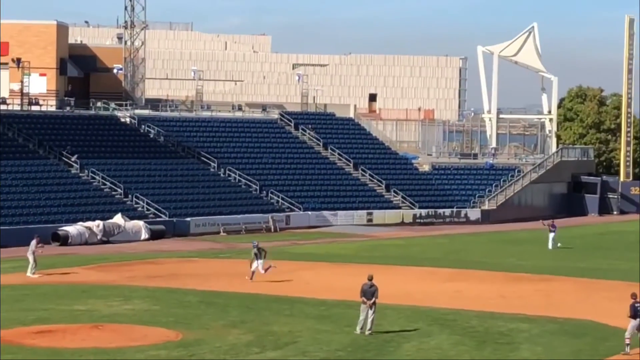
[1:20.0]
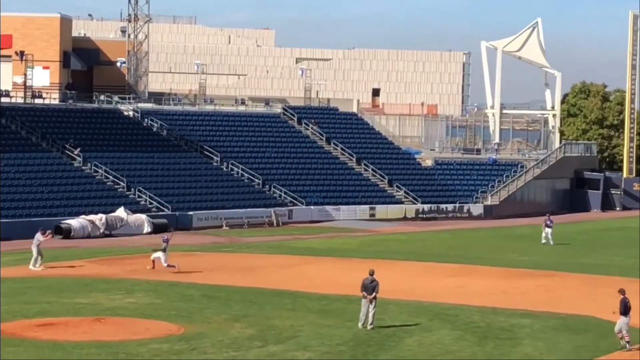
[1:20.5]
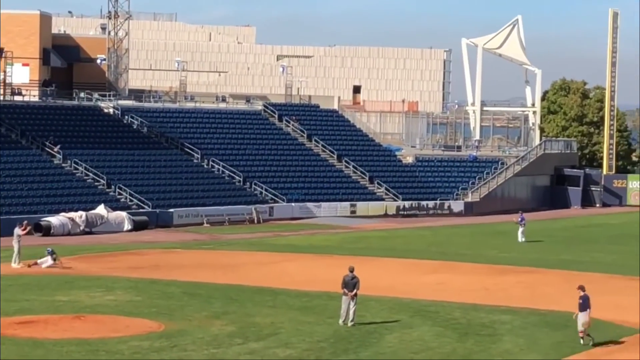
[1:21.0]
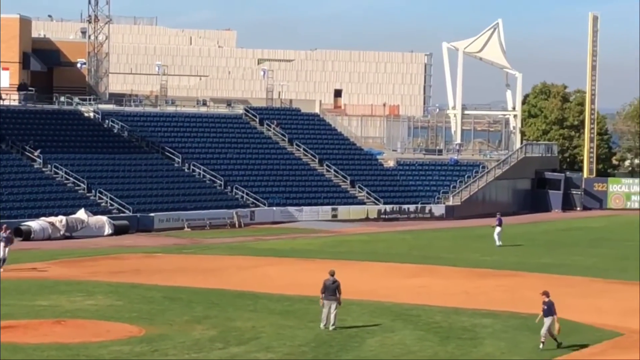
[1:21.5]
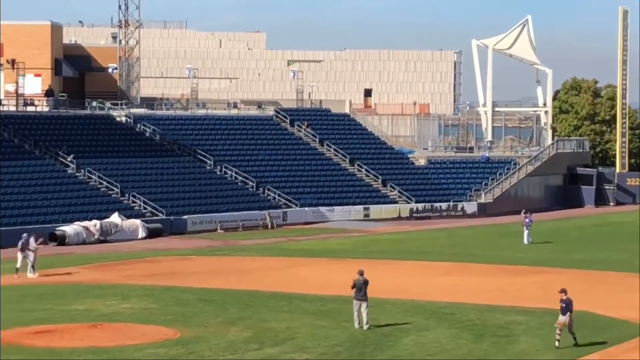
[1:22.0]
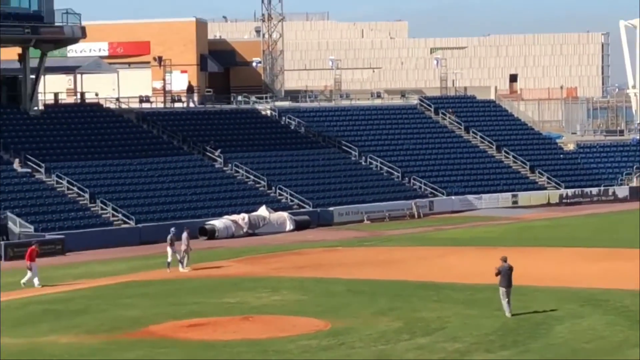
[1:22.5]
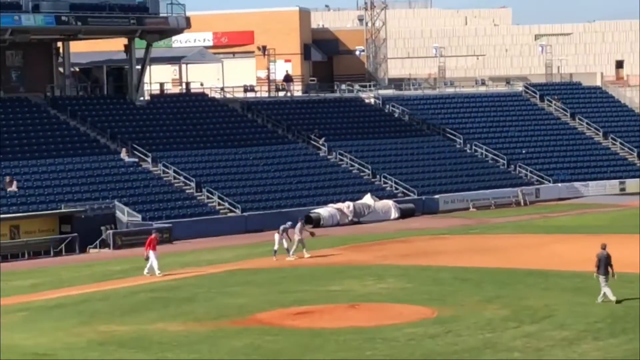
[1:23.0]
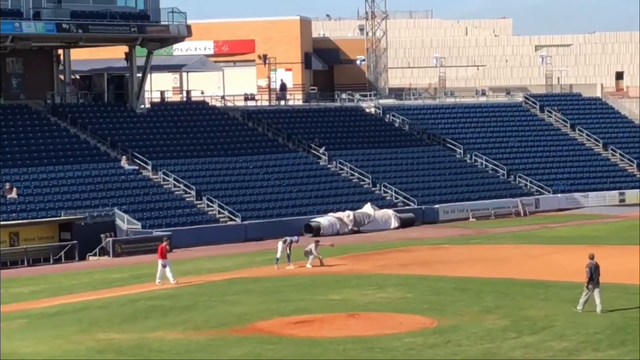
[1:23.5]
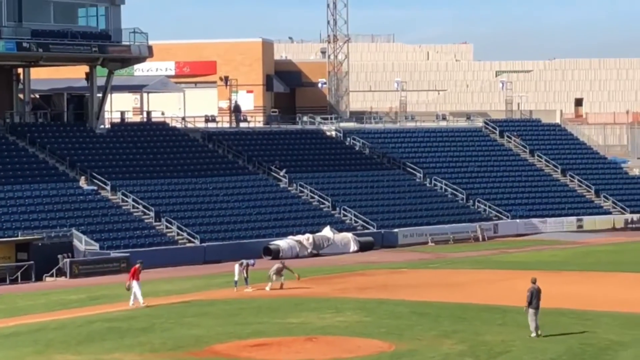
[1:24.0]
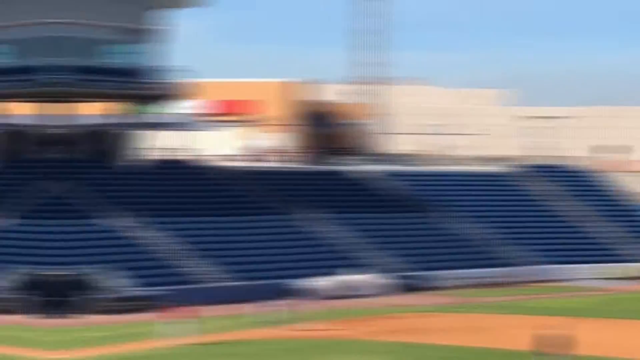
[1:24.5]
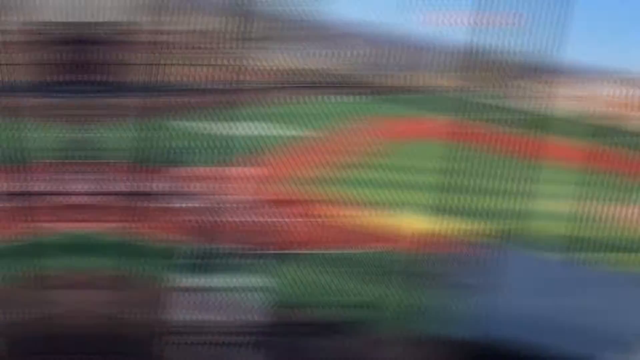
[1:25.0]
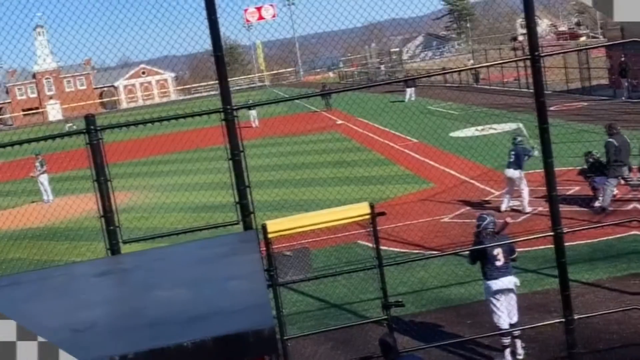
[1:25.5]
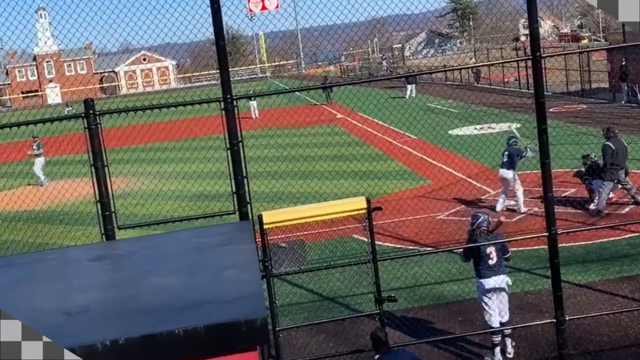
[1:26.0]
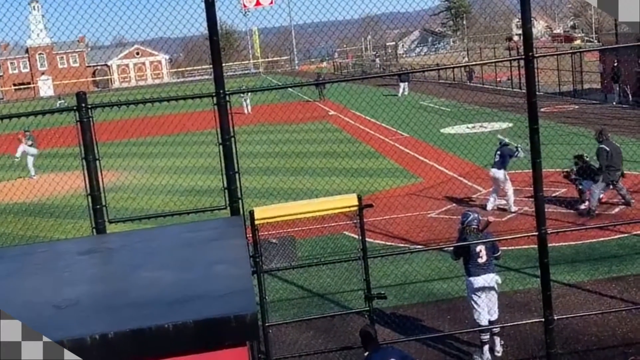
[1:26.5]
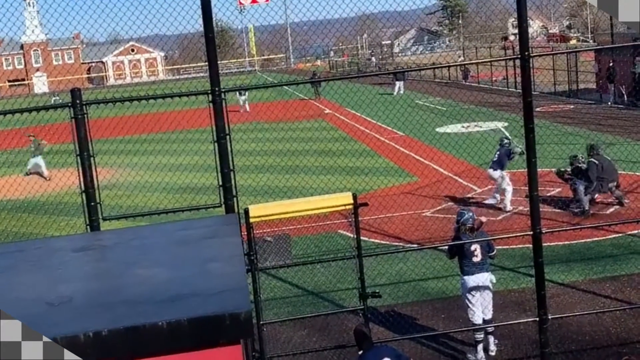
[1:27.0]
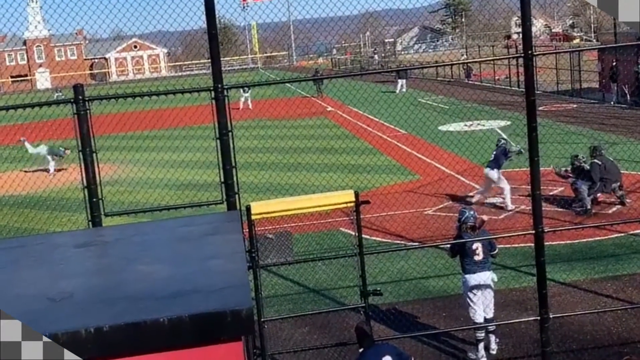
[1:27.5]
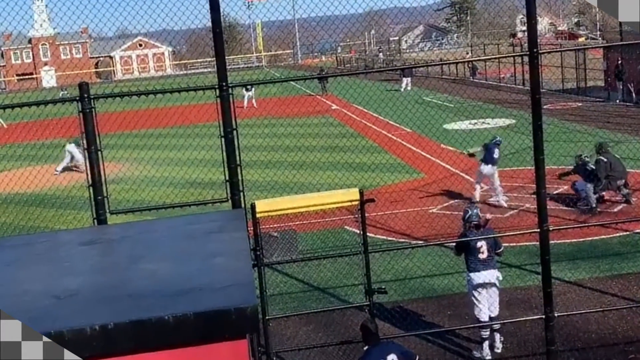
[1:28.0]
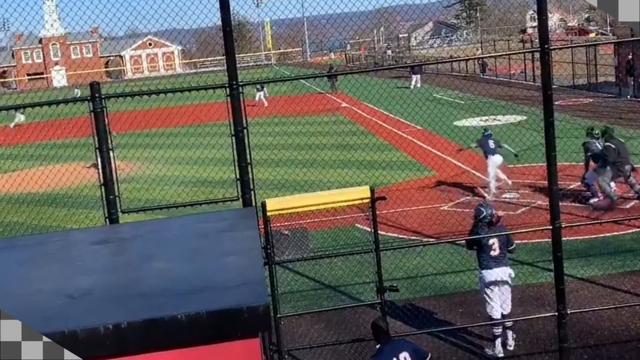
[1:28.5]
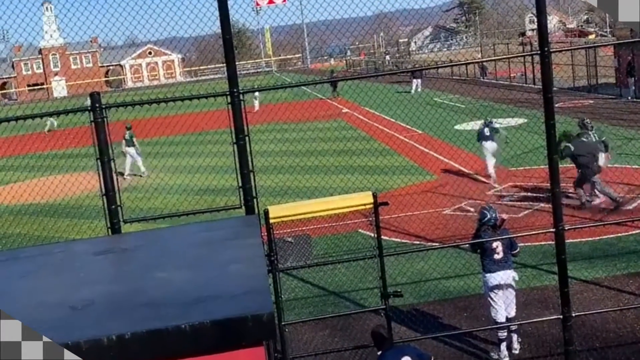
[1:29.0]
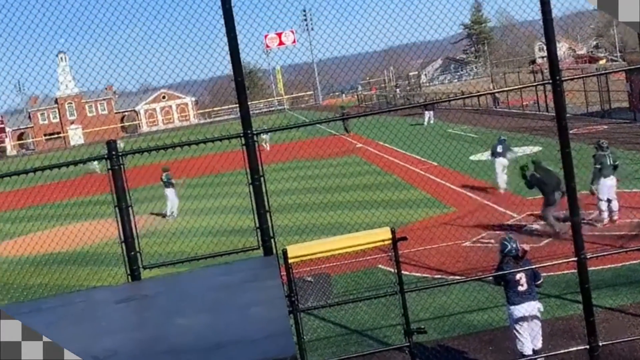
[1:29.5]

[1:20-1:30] A baseball game is going on outside, possibly a practice, since there are not many people in the stands. The sky is blue with not too many clouds. Plenty of black fencing goes around the field. Only a couple of people, perhaps owners, sit in the stands watching, and there is also an umpire.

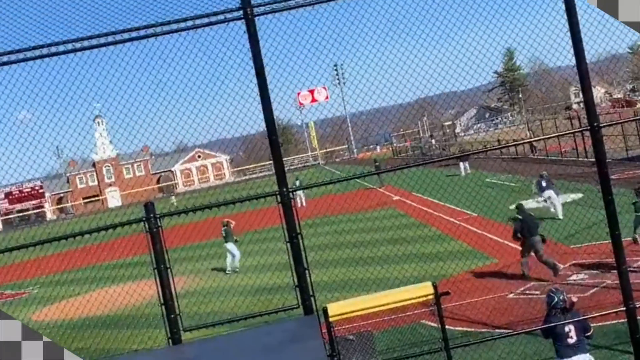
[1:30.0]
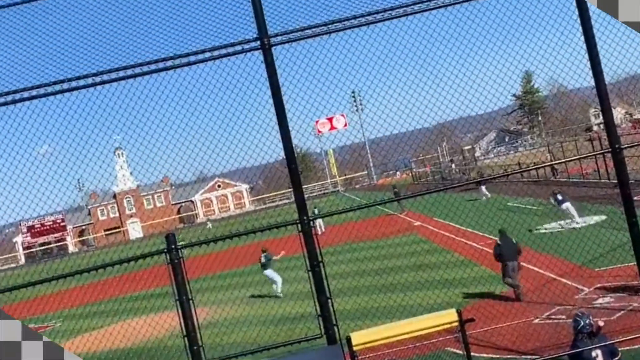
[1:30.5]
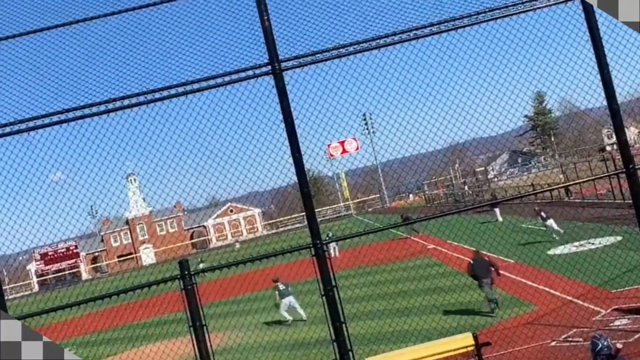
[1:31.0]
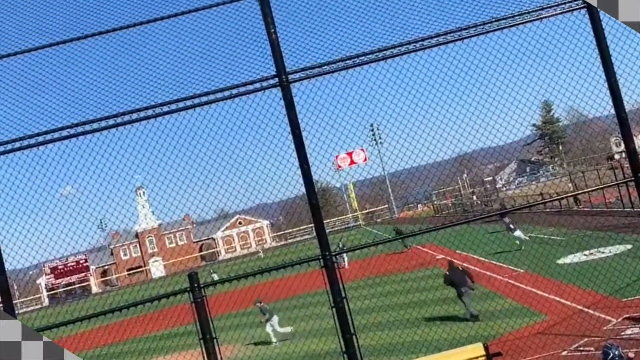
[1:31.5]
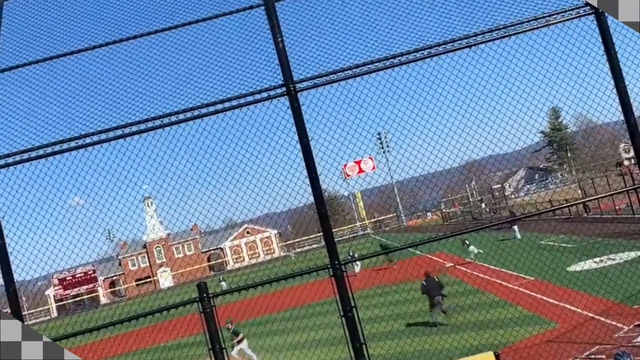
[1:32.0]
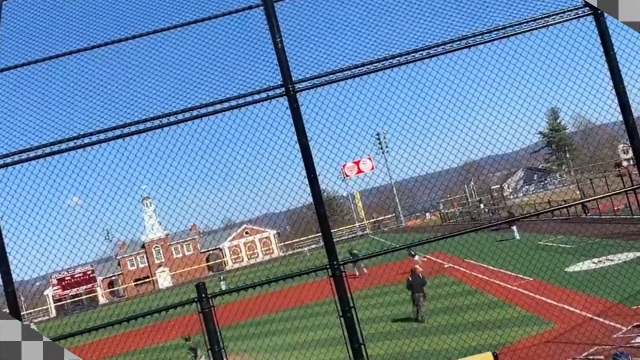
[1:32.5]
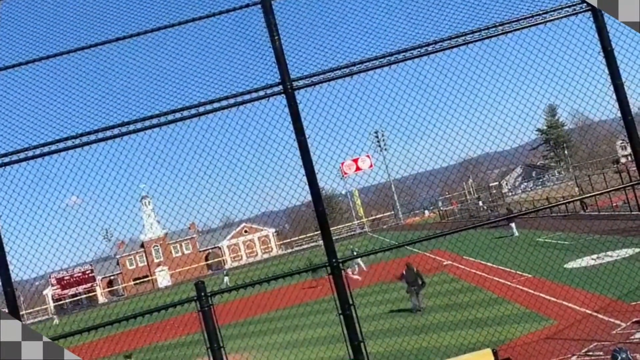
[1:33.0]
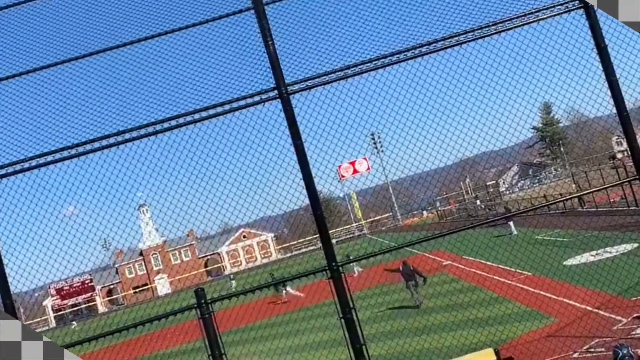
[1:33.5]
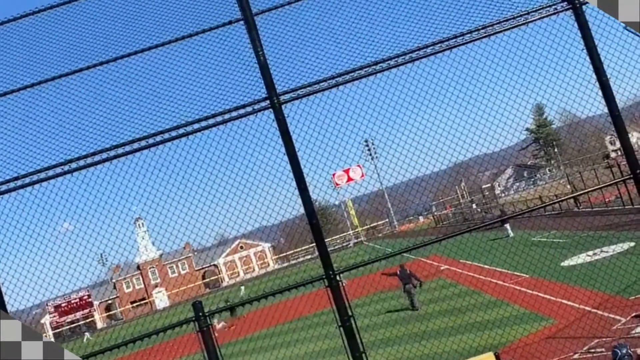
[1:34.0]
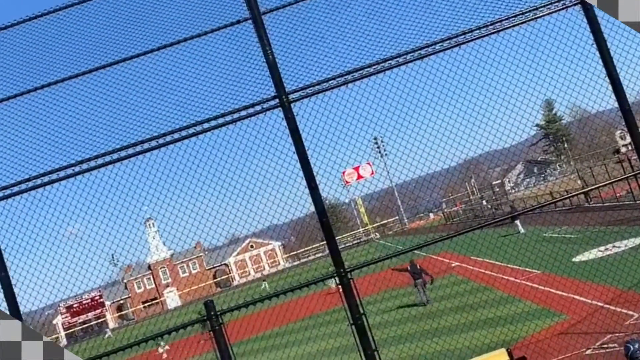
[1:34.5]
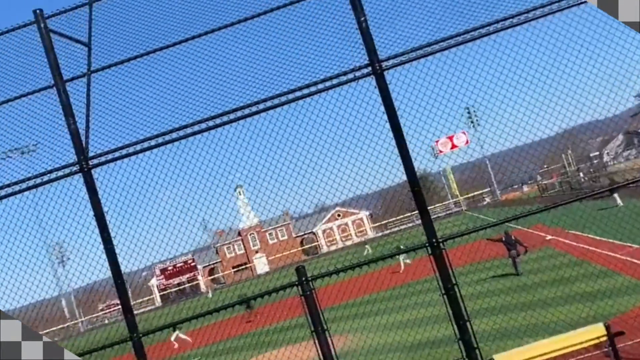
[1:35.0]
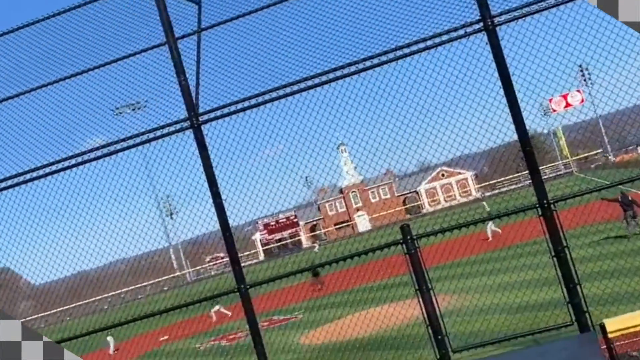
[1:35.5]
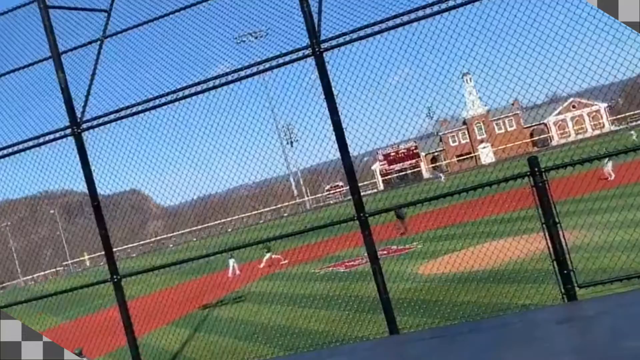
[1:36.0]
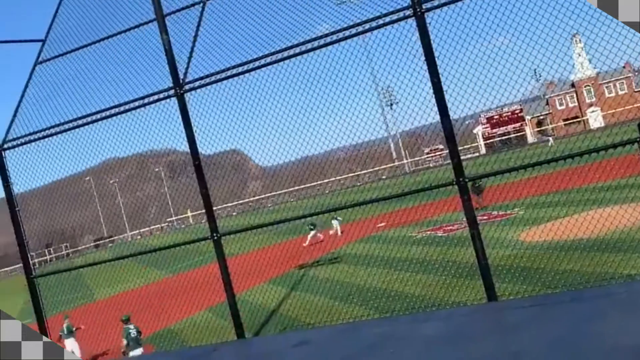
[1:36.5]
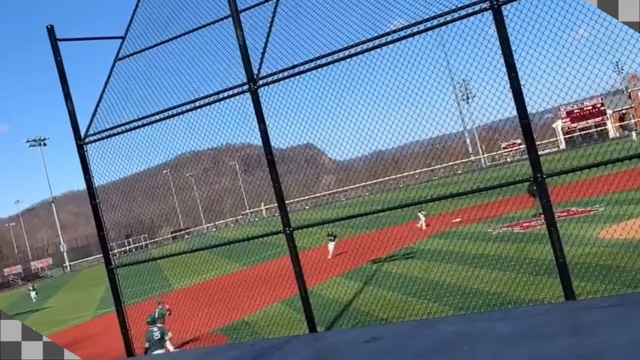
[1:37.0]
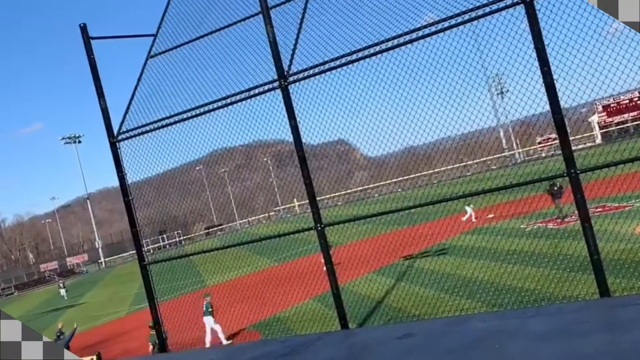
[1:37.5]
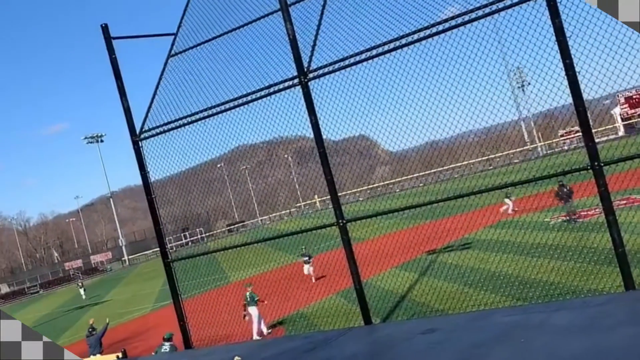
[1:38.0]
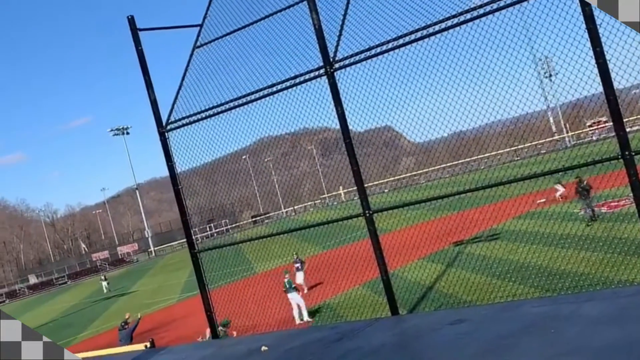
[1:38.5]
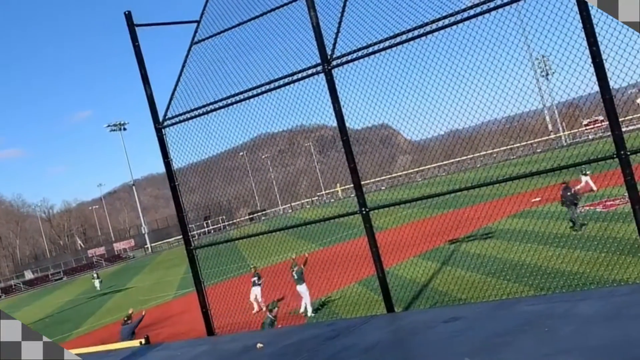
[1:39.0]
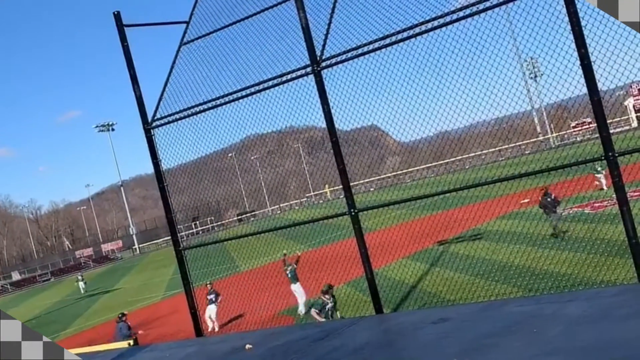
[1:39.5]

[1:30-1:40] During a baseball game, possibly a practice, someone has just hit the ball very far, and the runner appears to be trying to get all the way around the bases, perhaps for an in-the-park home run. The umpire runs out and points, and someone, possibly the catcher, a referee or one of the coaches, gives directions. A red brick building stands in the background with a large, steeple-like structure on top. There is a lot of fencing behind the hitting area.